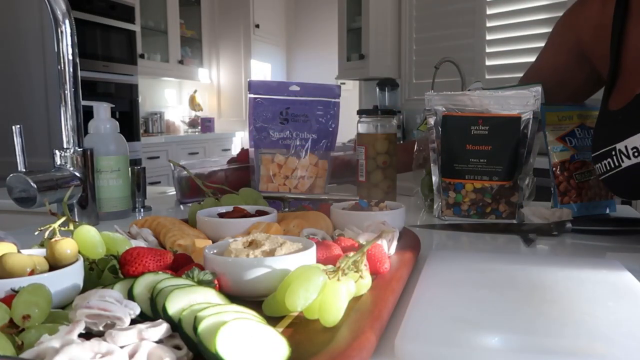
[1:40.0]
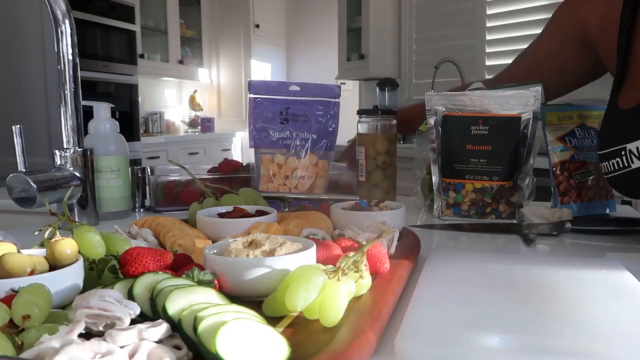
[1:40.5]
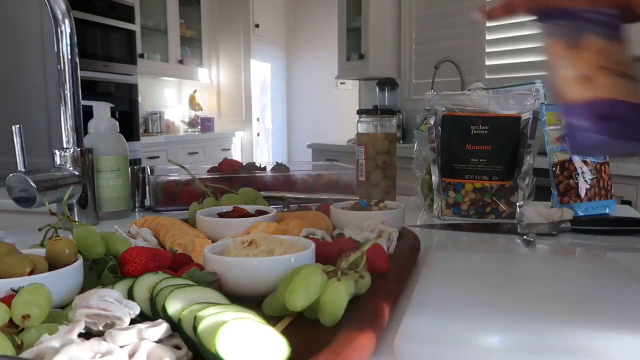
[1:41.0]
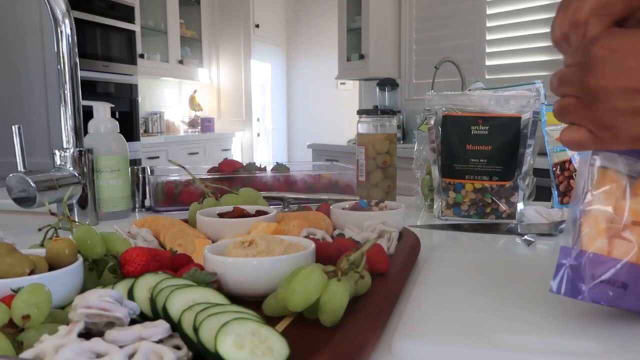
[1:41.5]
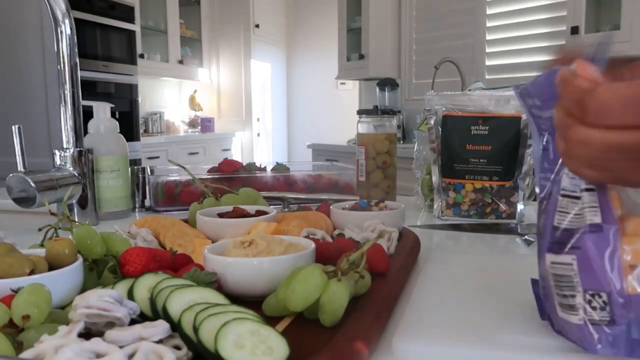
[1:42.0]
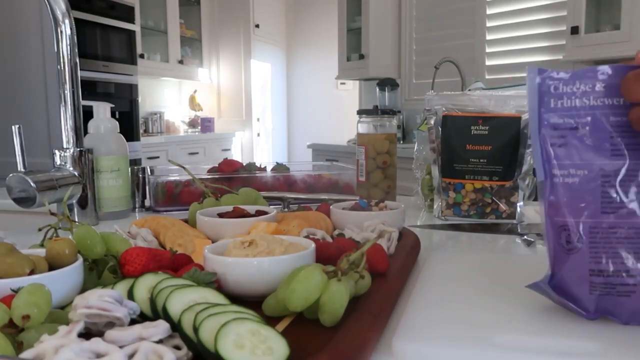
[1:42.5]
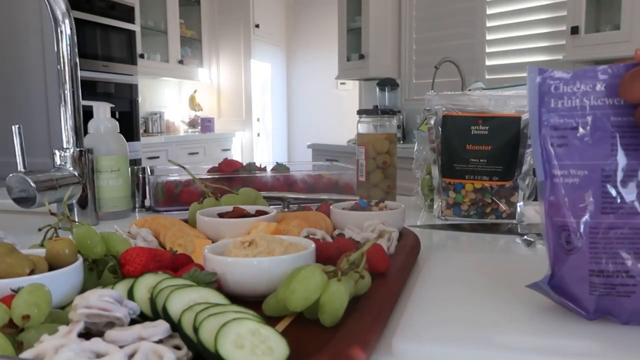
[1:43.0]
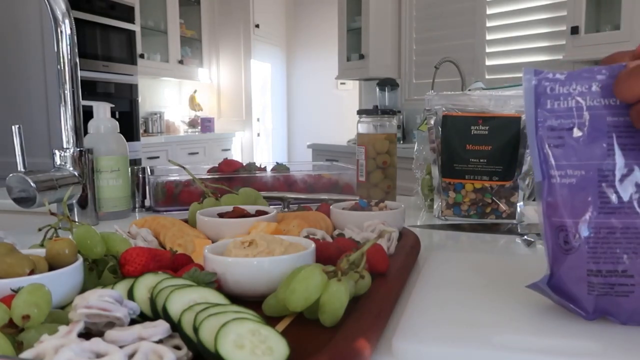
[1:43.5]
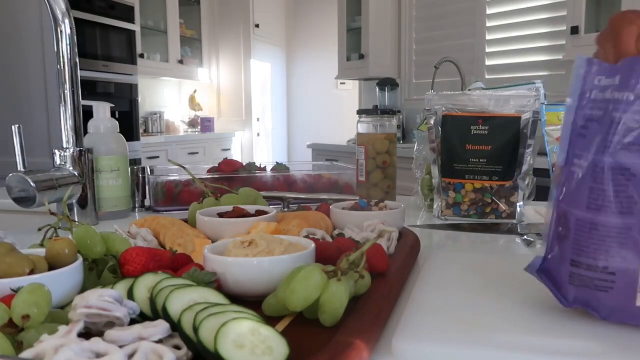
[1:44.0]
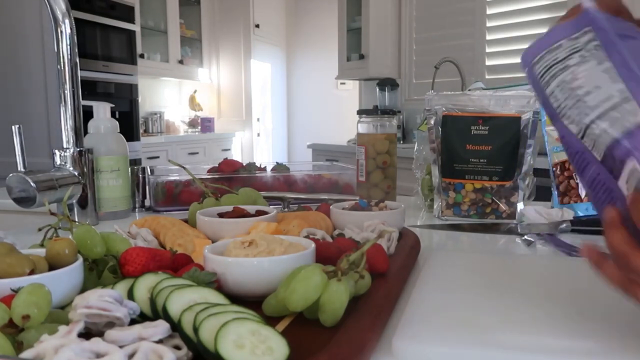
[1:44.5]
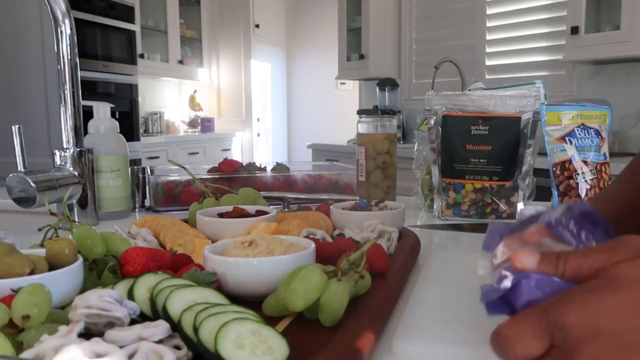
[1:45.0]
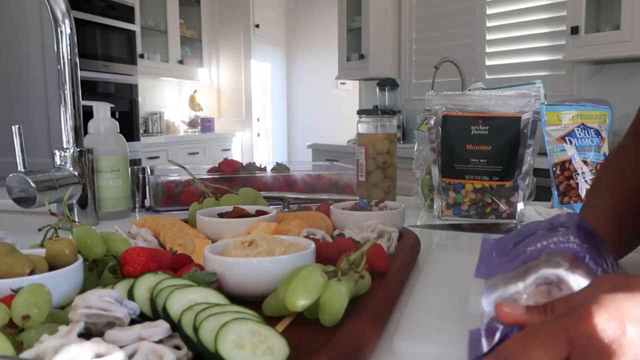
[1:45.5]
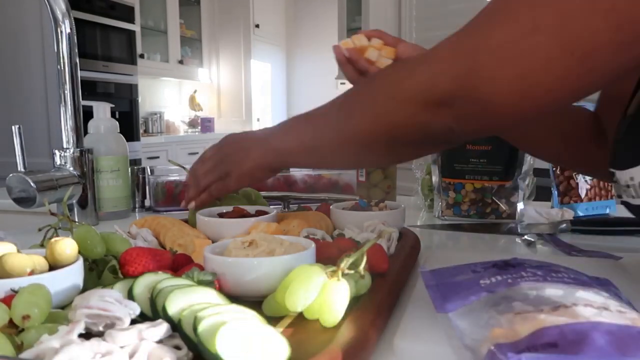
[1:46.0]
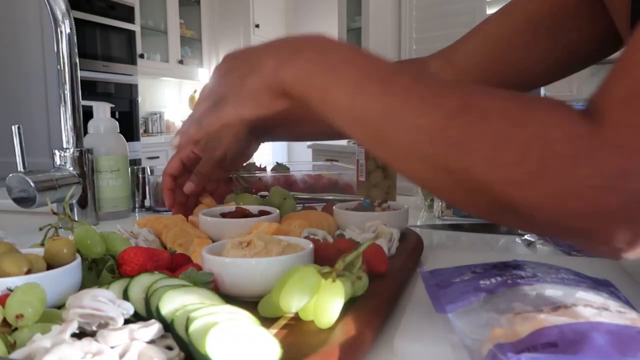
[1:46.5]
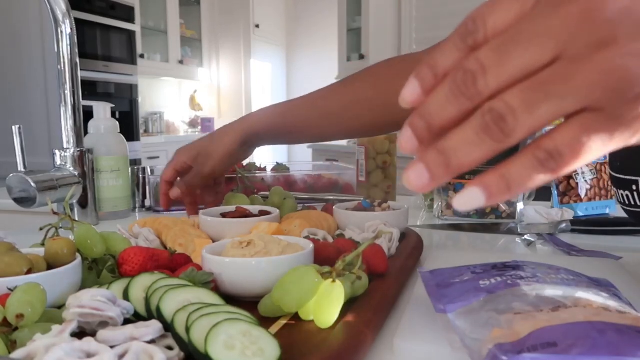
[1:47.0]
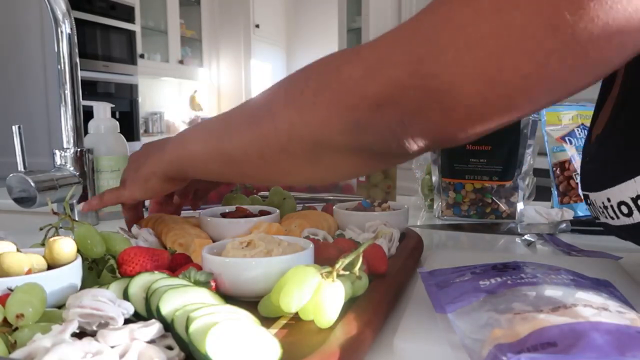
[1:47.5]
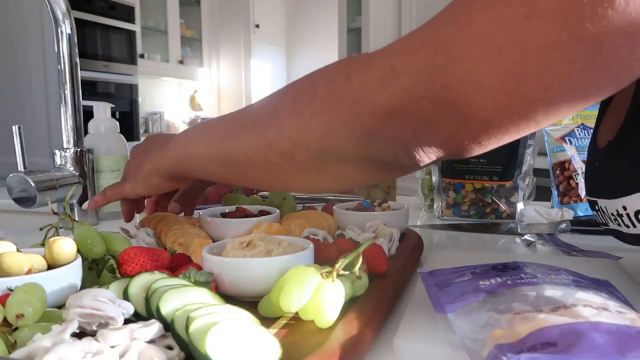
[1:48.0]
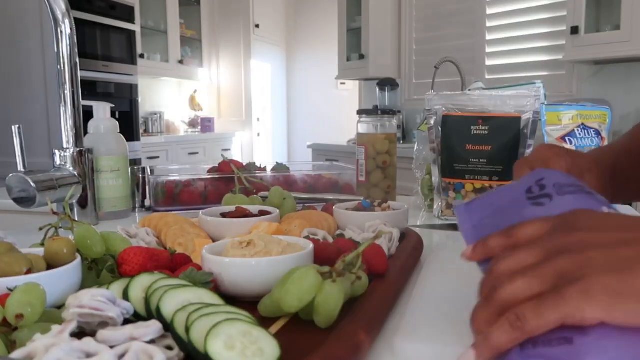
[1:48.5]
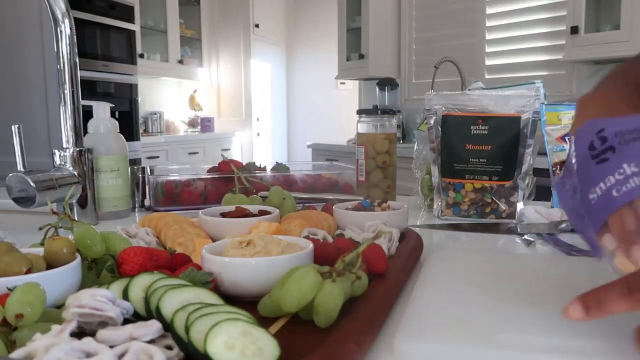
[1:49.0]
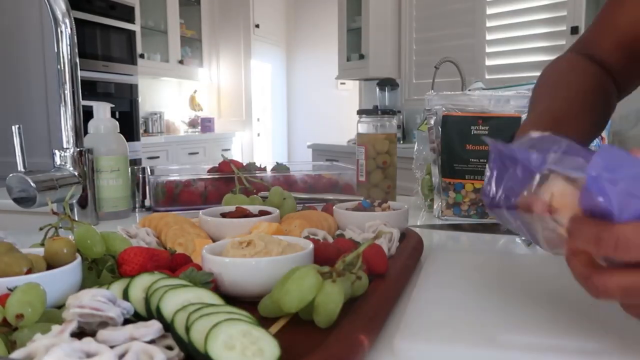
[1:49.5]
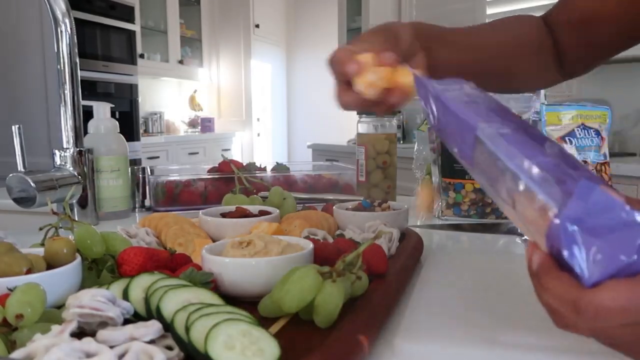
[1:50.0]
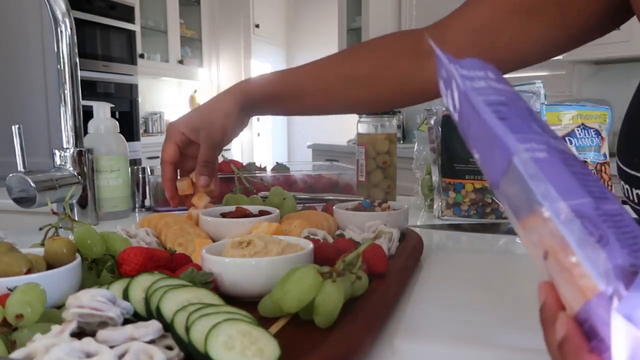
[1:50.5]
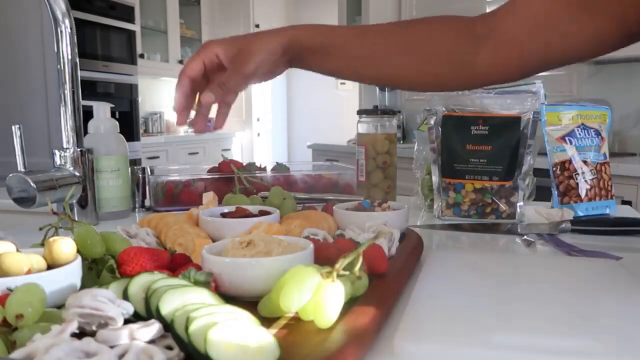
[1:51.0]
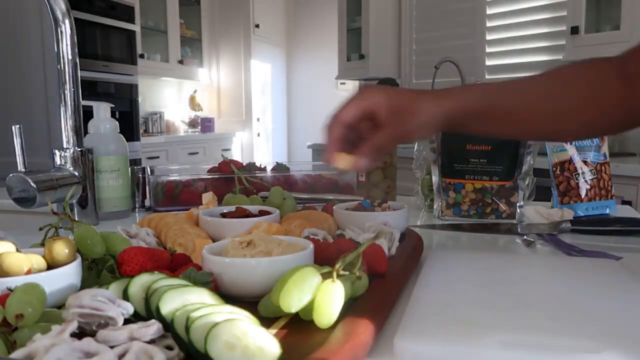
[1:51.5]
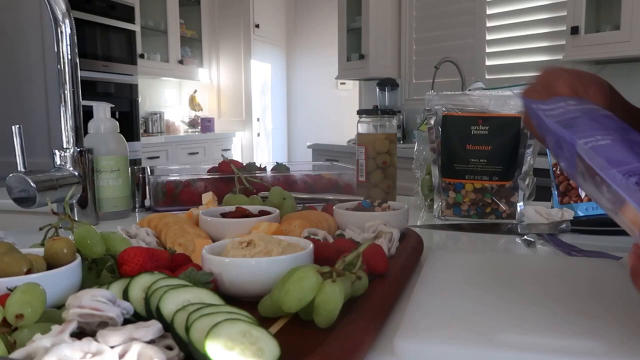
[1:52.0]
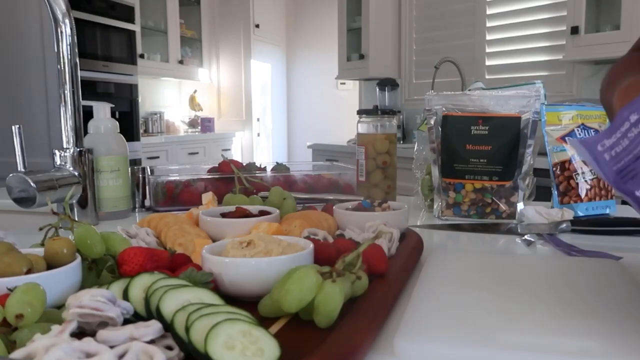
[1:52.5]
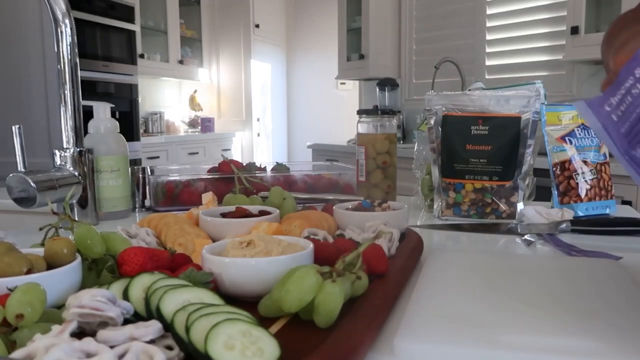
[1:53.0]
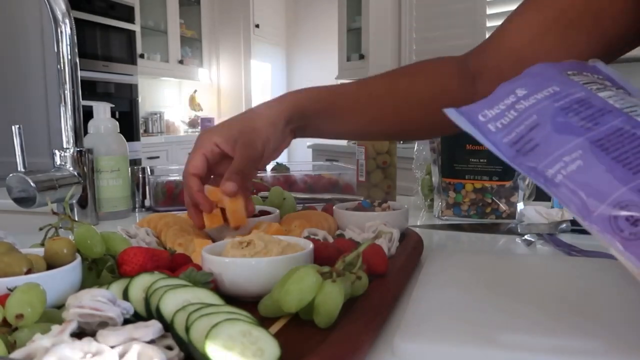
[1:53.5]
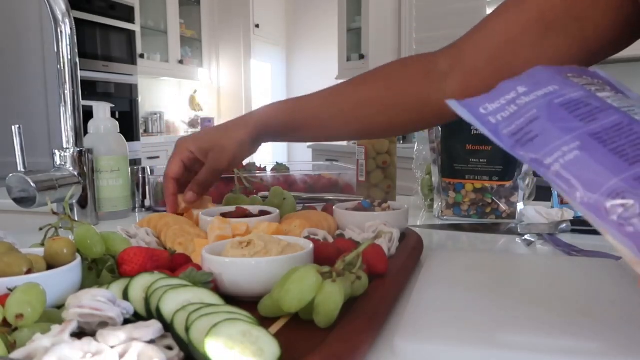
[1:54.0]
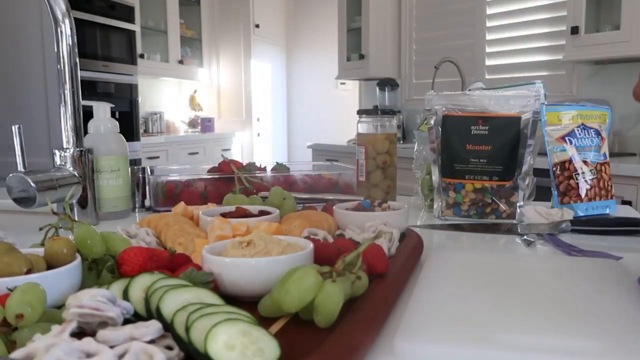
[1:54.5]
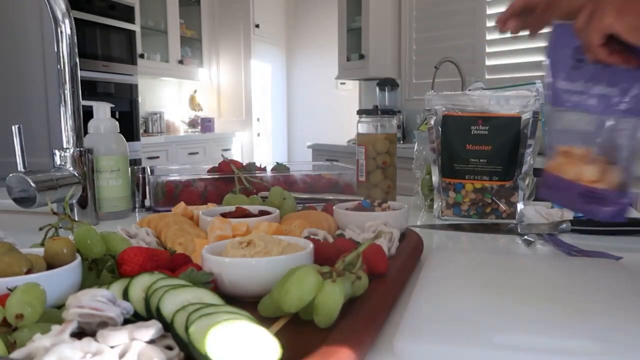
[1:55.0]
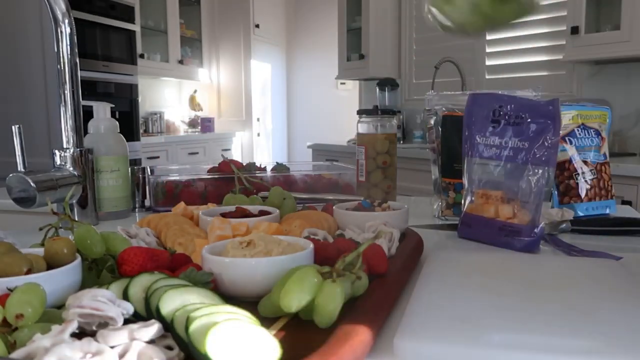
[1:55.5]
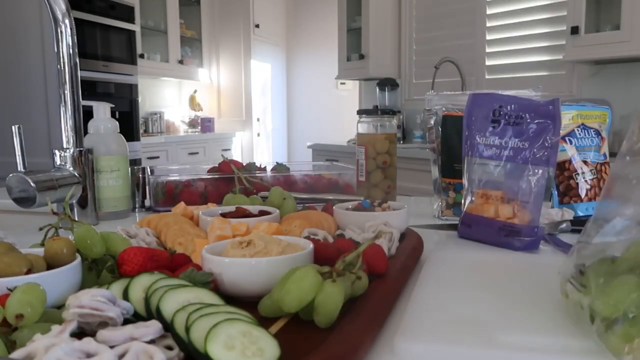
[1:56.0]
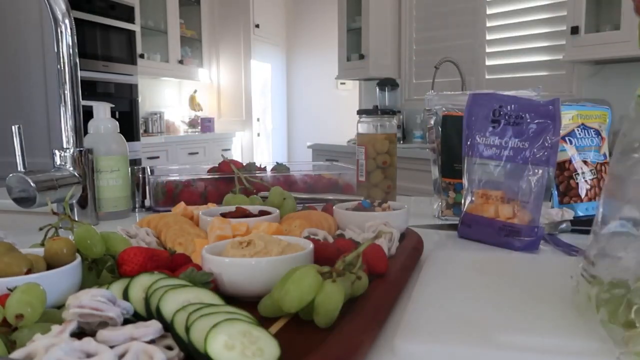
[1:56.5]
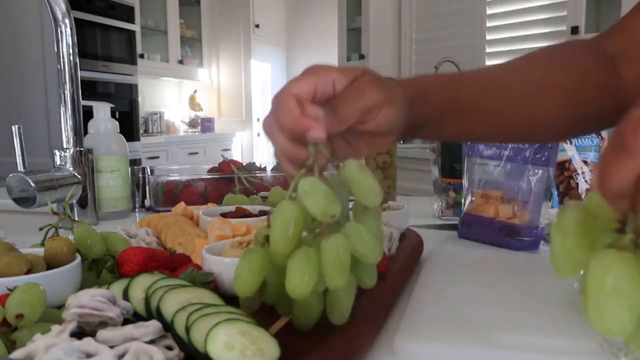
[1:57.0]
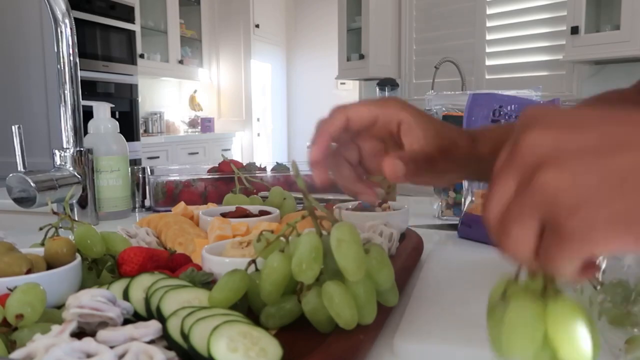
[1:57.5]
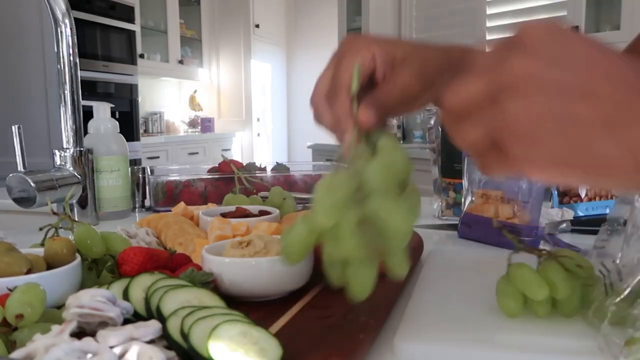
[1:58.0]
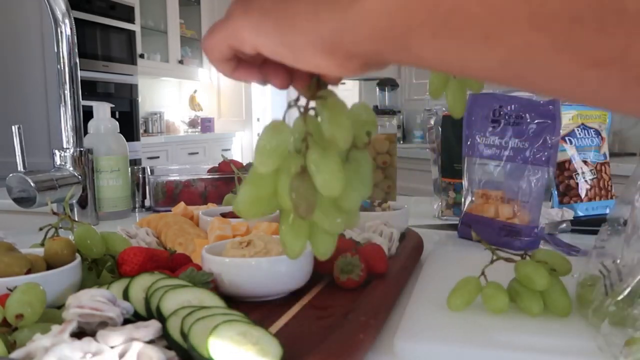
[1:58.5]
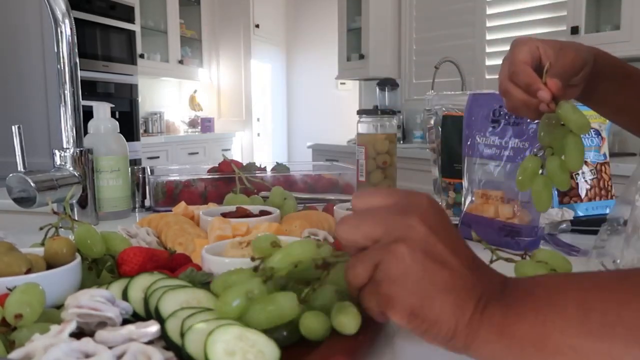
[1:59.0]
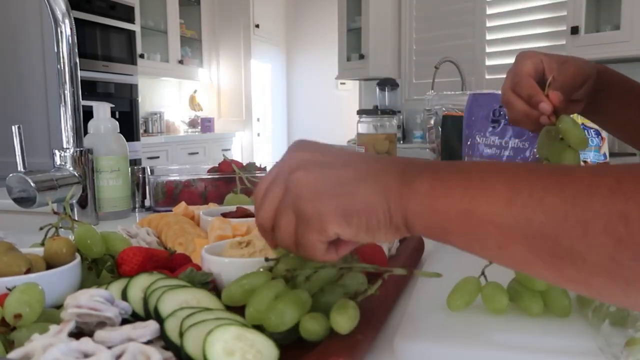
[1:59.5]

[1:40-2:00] A chopping board is shown on which the lady has put grapes, strawberries, olives and cucumbers, along with four bowls: one has a dip for the cakes, one has sweets and one has walnuts. She has also placed cakes on the board, and she takes some cheese and places it on the board as well. On the kitchen counter there is a tap and hand wash, and the kitchen has a blender, an oven, a microwave and another kitchen sink on the far left. The kitchen cupboards are white, and there is a white blind. The lady is preparing the cheese board, showing how to do it.